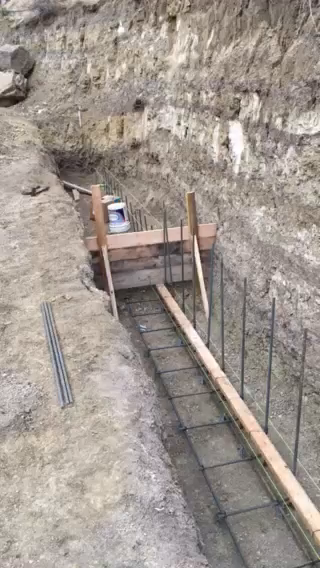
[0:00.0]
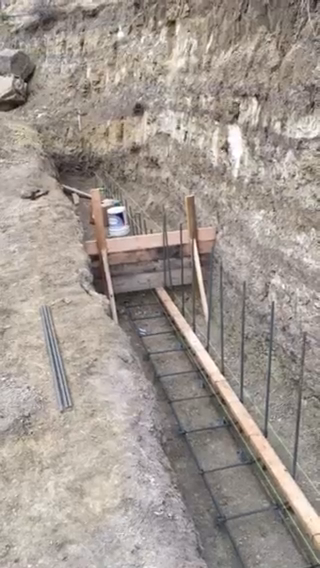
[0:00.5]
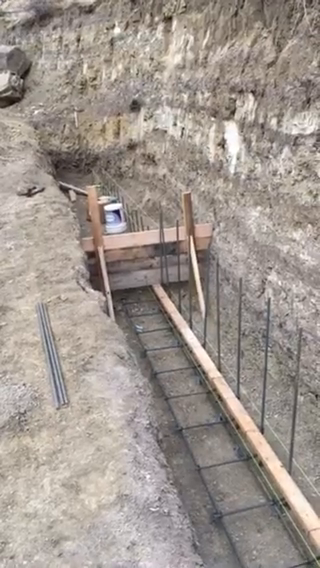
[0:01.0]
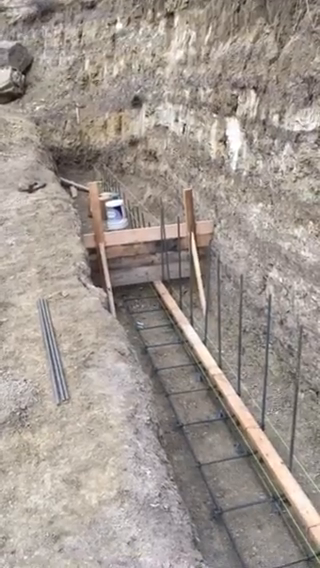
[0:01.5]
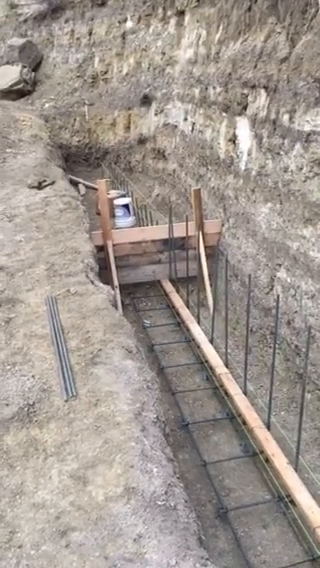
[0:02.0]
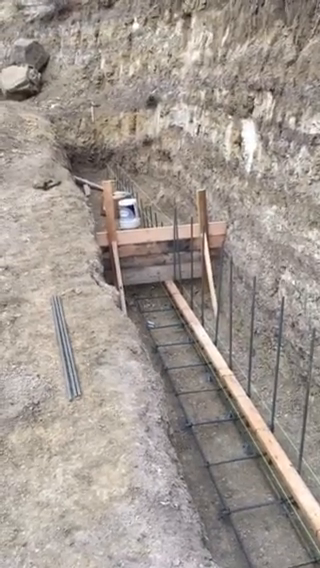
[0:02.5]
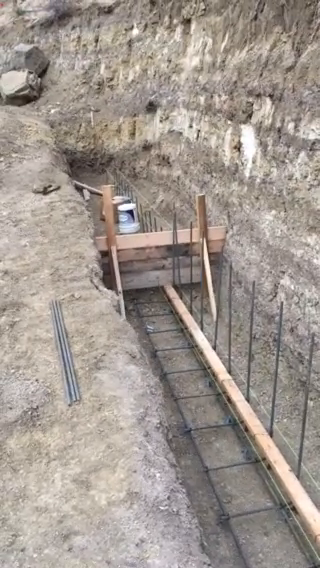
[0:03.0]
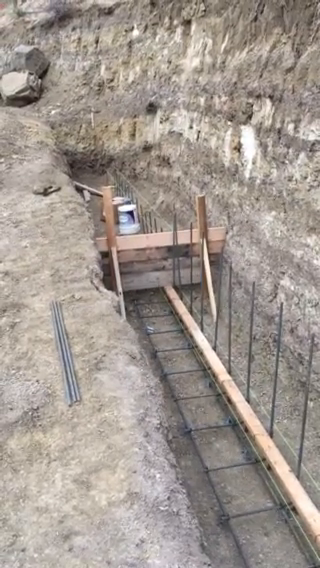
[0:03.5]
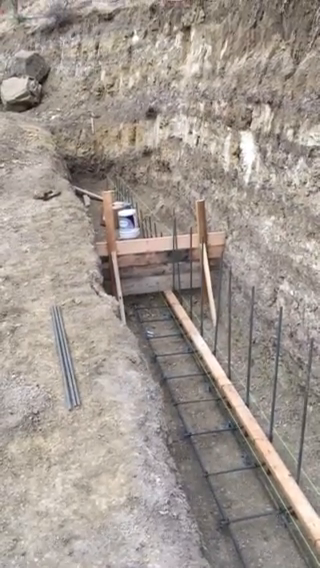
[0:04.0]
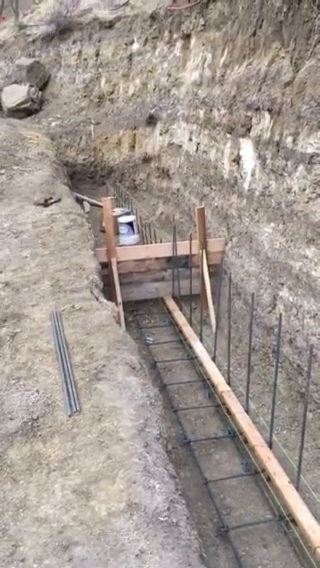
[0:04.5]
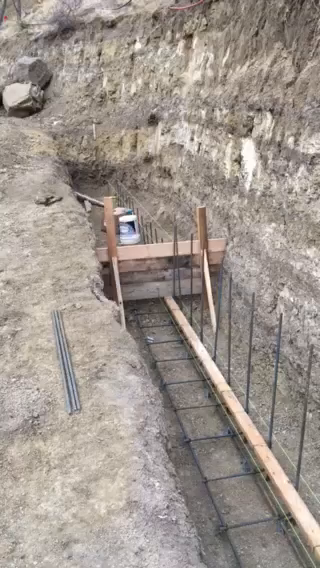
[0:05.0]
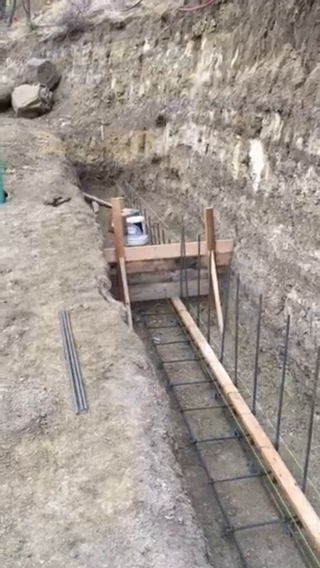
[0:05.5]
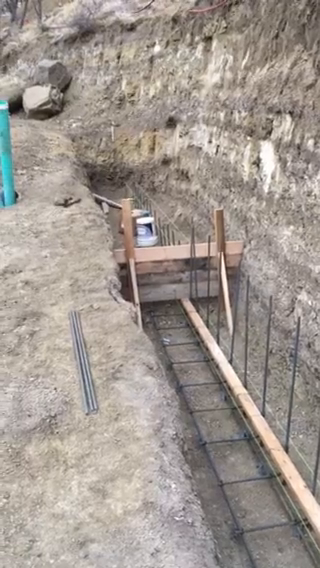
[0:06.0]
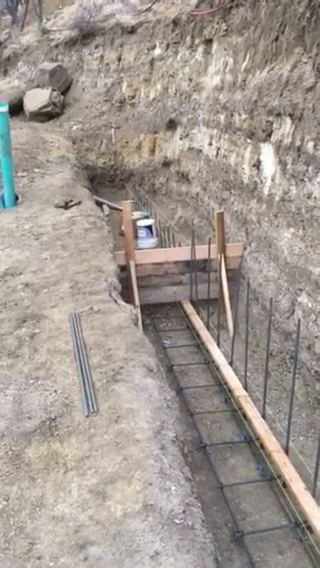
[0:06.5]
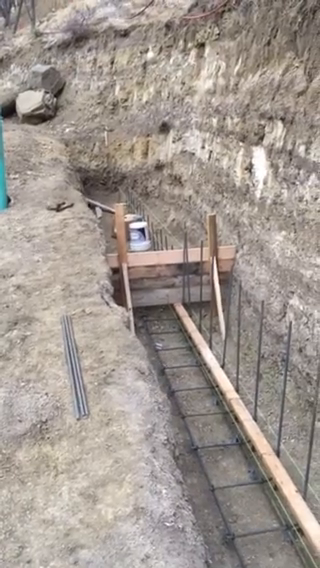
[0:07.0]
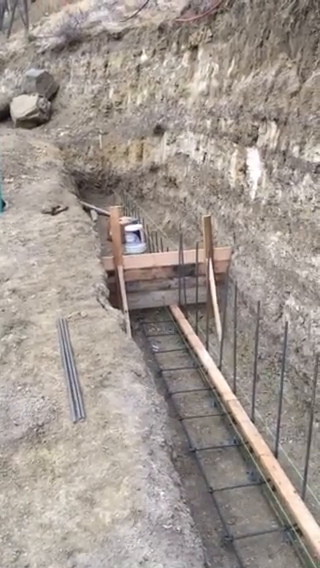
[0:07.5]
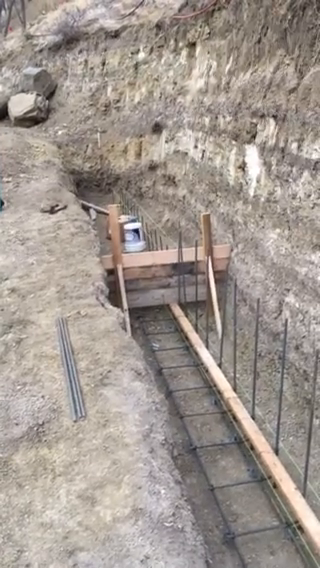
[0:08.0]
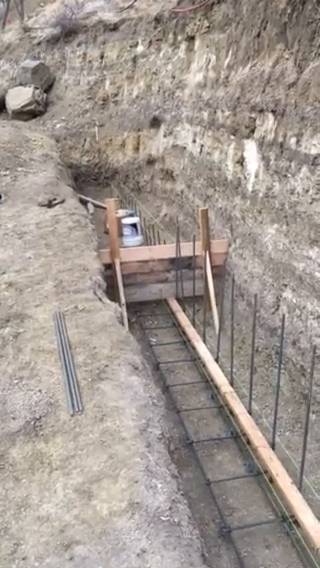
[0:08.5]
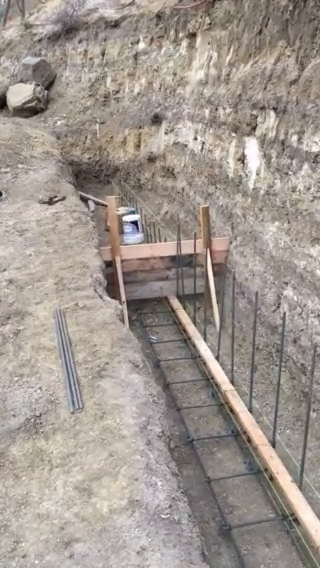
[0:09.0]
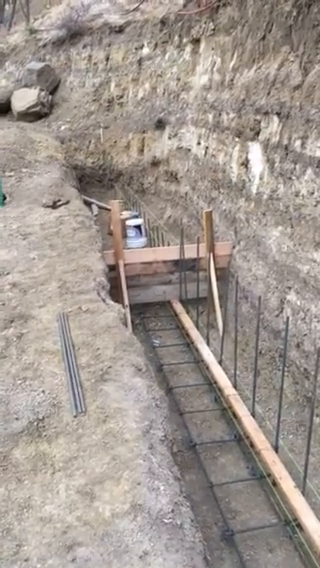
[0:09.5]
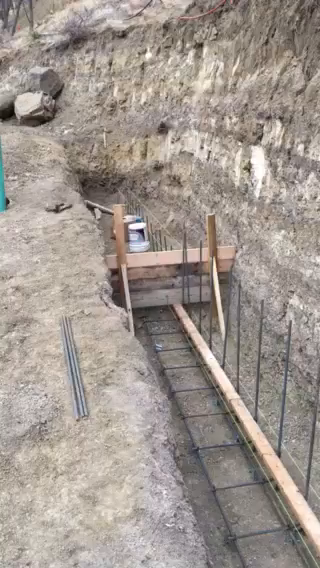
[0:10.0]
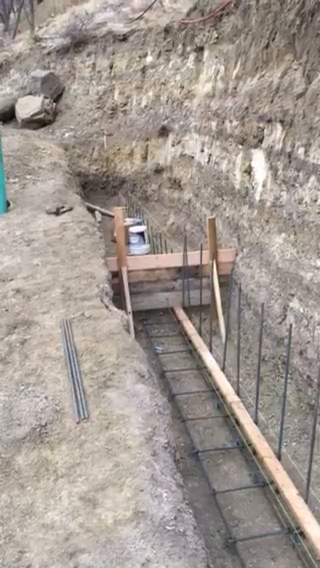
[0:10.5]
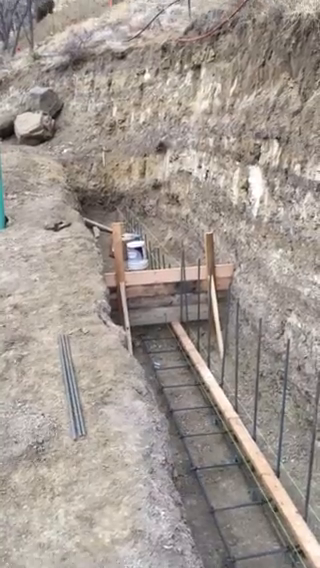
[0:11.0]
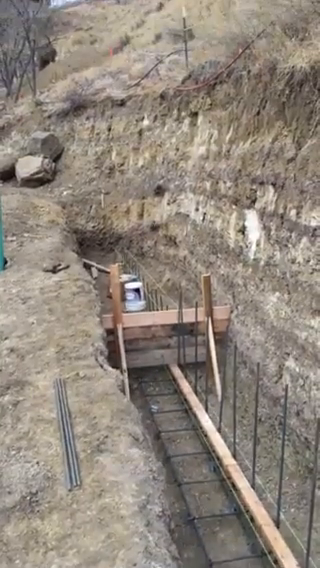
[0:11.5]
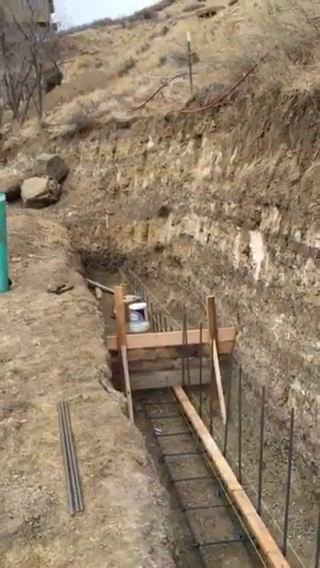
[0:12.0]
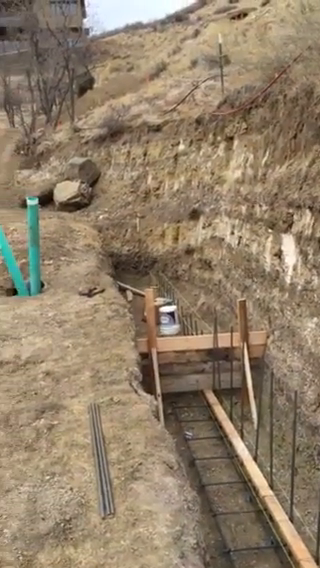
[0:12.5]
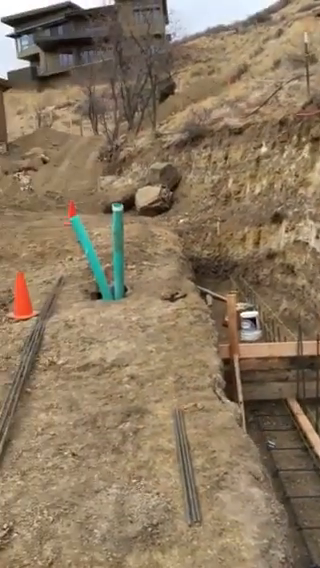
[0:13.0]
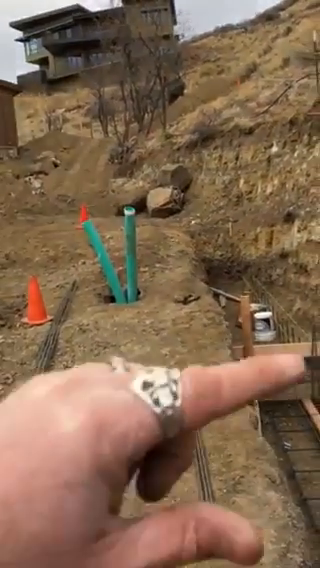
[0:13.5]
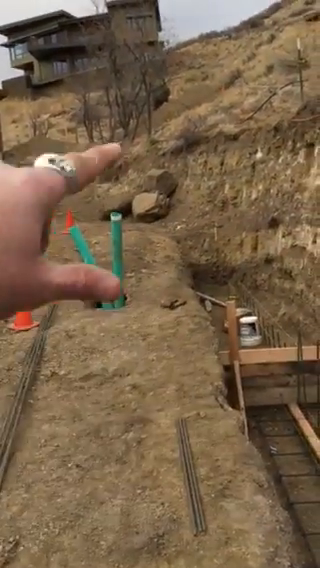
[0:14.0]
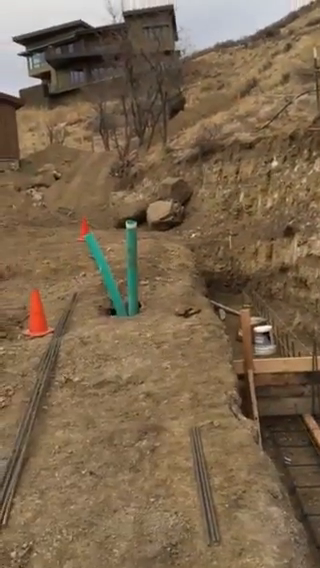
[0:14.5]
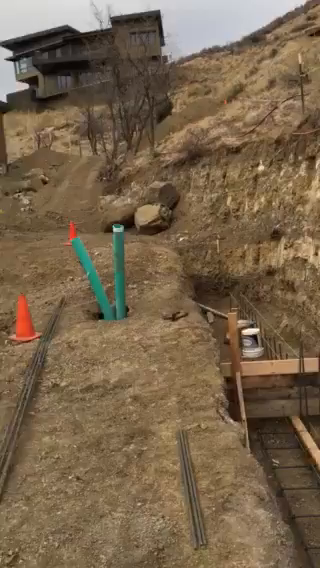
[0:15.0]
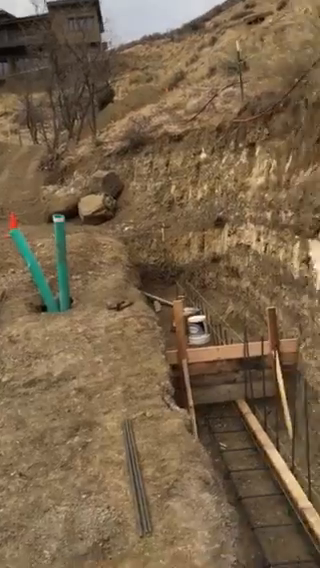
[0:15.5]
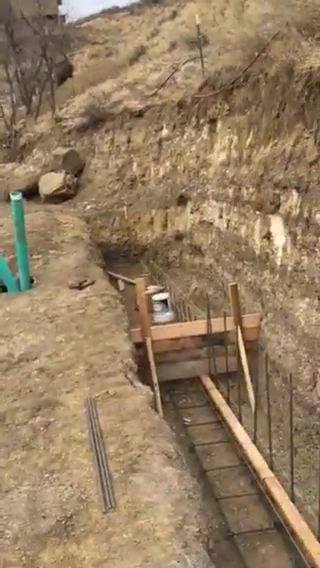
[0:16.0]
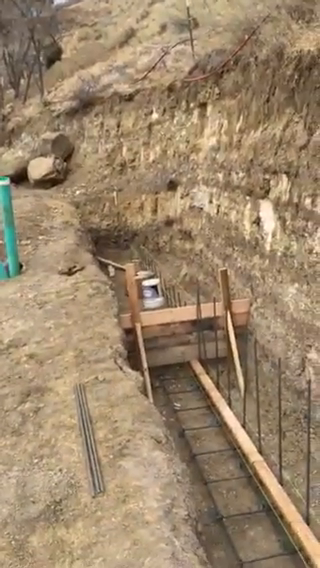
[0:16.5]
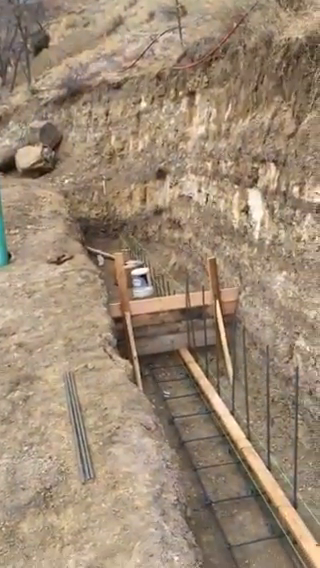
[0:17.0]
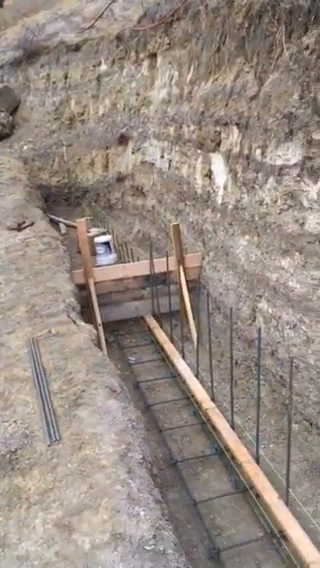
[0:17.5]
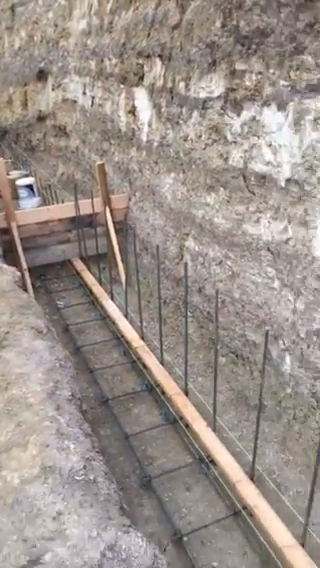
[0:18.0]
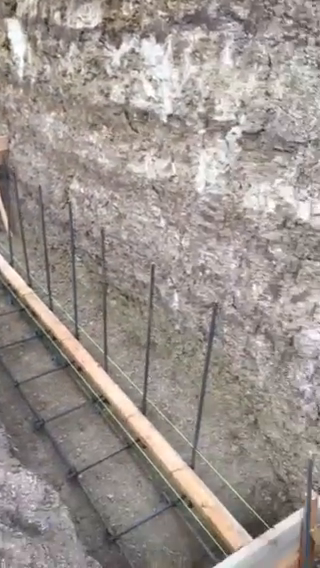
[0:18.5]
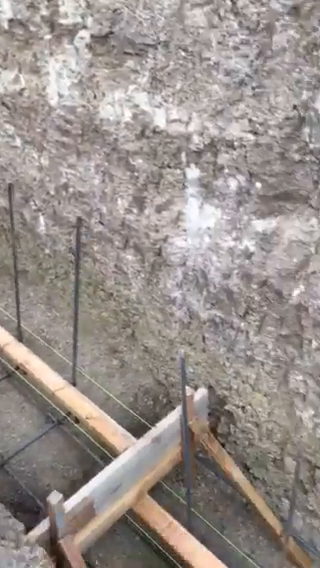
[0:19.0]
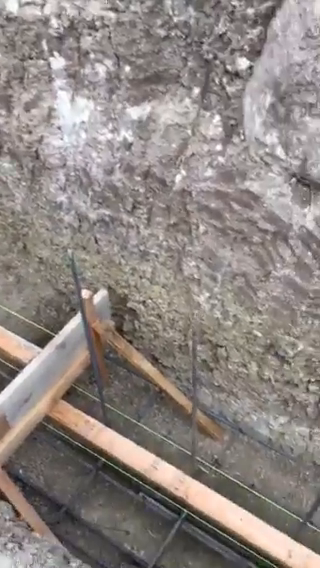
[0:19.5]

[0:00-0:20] A close-up shot focuses on a furrow, or rather a tunnel, with an excavator inside it. The furrow has been dug very deep and long, and it is apparently meant for laying a pipeline system. A hand appears, and a man points all over the excavation site, perhaps showing how far the excavation should extend. The place does not change; it is a workshop site. The excavator is deep in the far front, two big stones are right in front of the tunnel, and at the far end there is a flat building. The area is very rocky. Deep in the excavation site, pillars of both wood and metal are being raised over and down into the tunnel, and metal plates have been laid like a ladder.